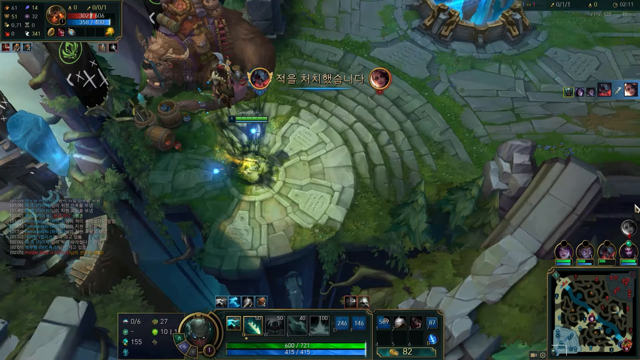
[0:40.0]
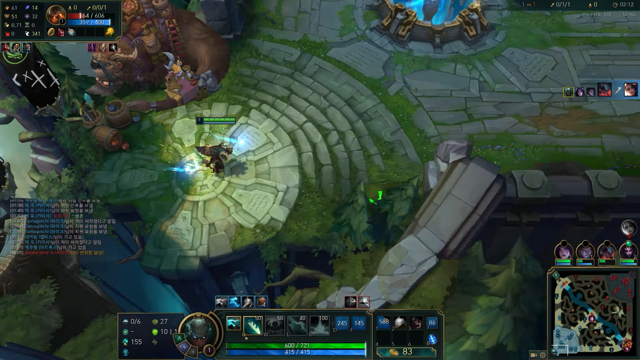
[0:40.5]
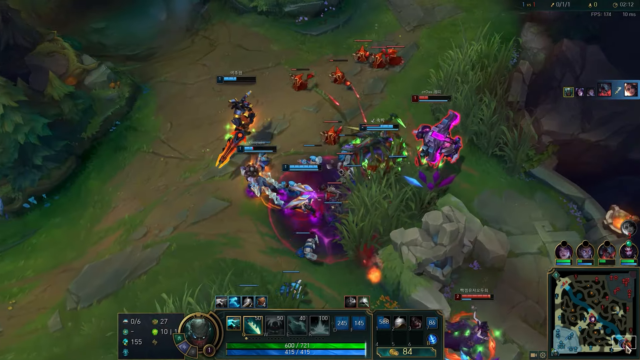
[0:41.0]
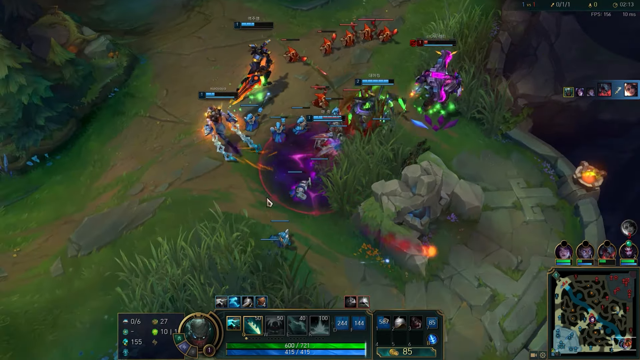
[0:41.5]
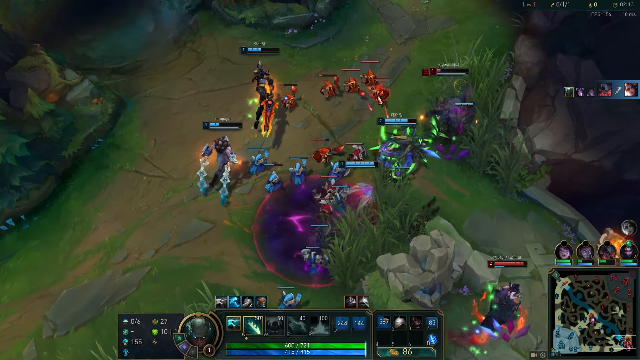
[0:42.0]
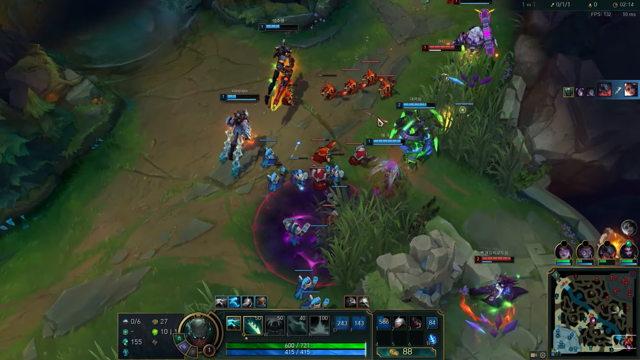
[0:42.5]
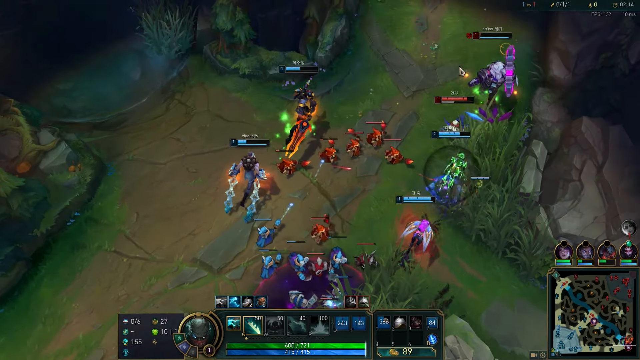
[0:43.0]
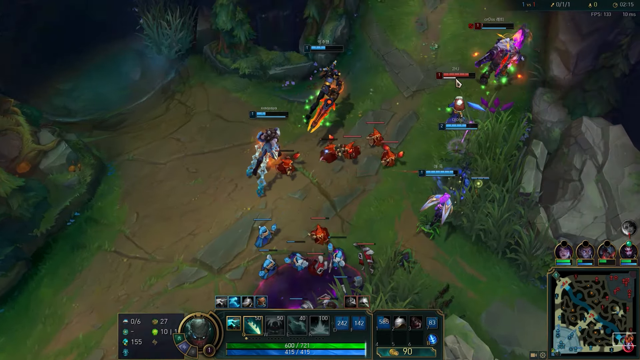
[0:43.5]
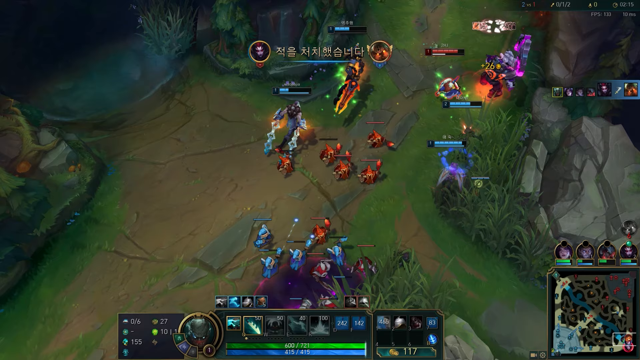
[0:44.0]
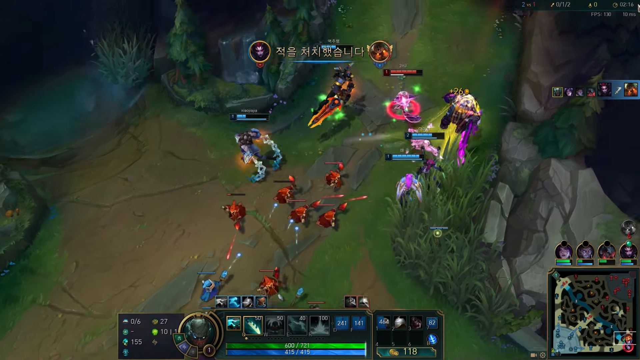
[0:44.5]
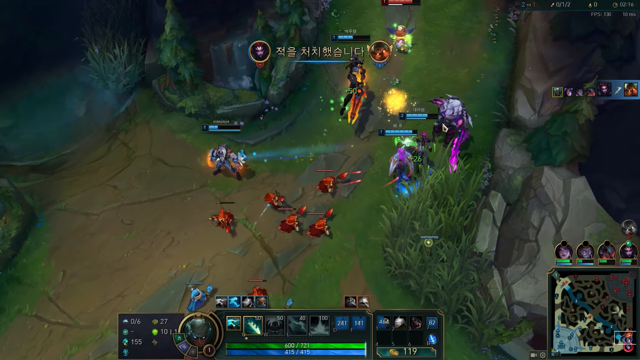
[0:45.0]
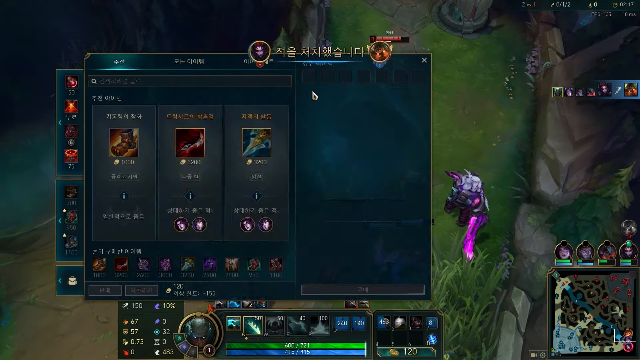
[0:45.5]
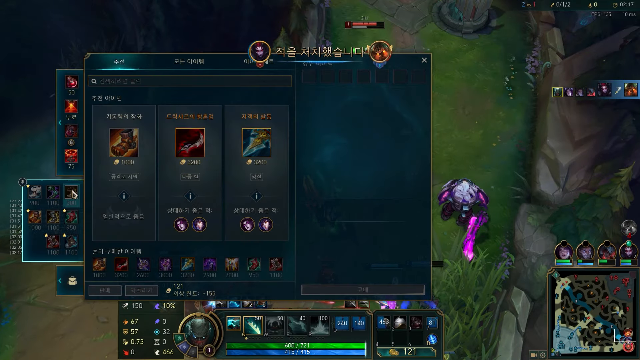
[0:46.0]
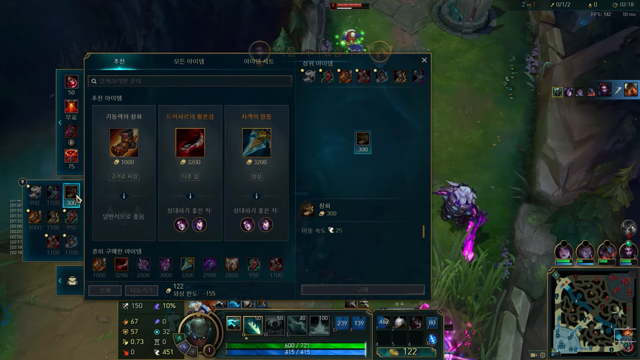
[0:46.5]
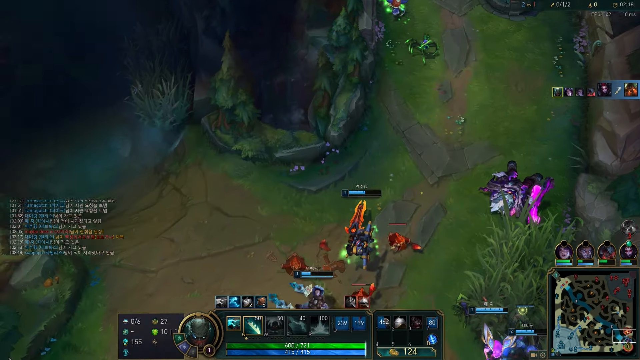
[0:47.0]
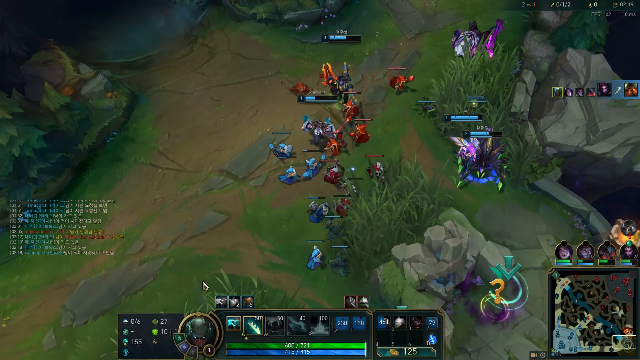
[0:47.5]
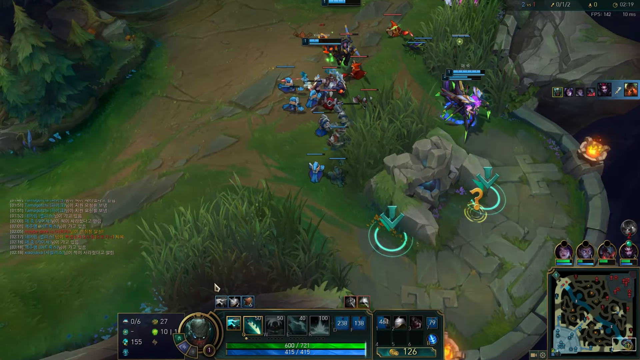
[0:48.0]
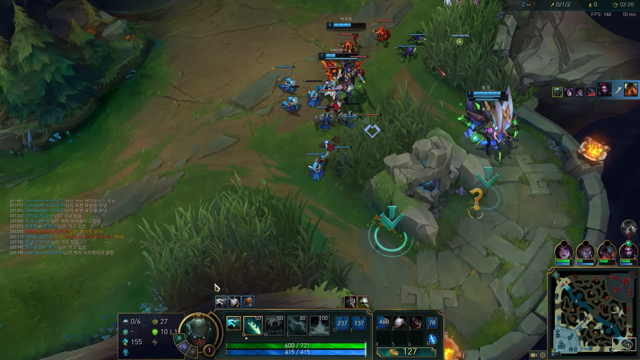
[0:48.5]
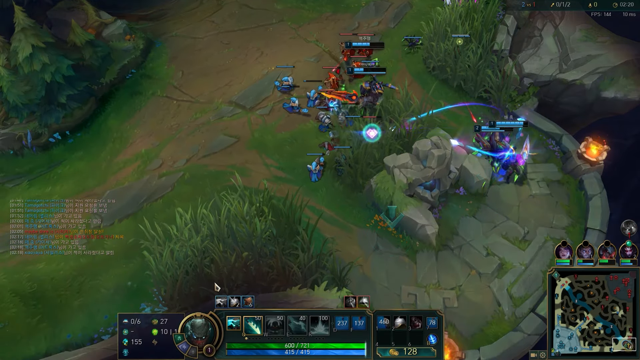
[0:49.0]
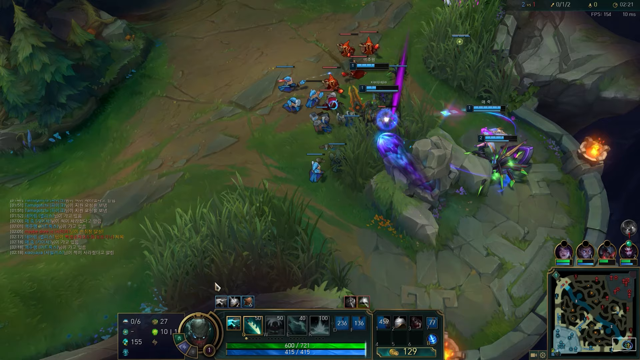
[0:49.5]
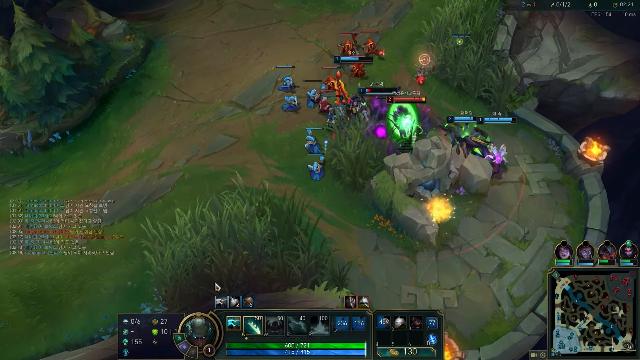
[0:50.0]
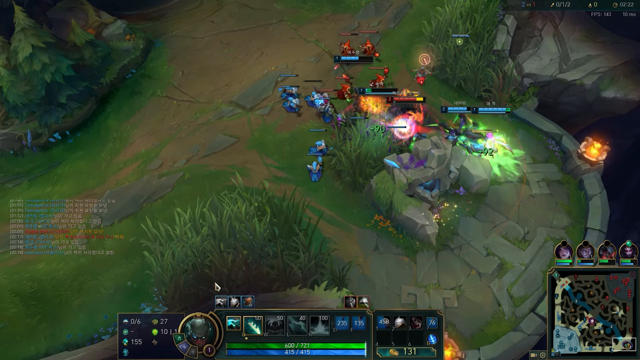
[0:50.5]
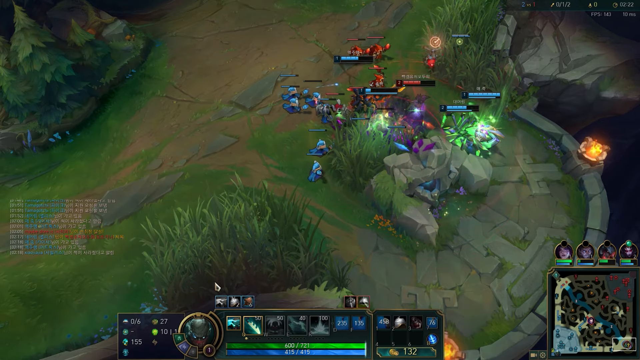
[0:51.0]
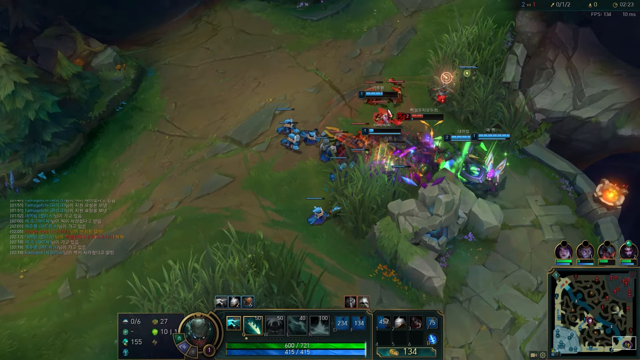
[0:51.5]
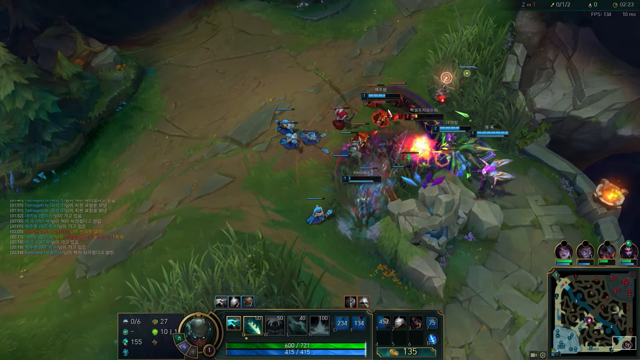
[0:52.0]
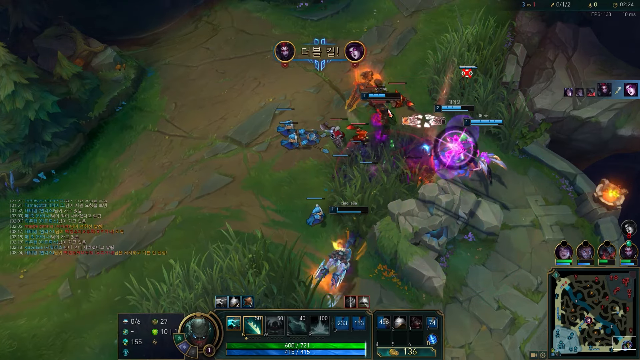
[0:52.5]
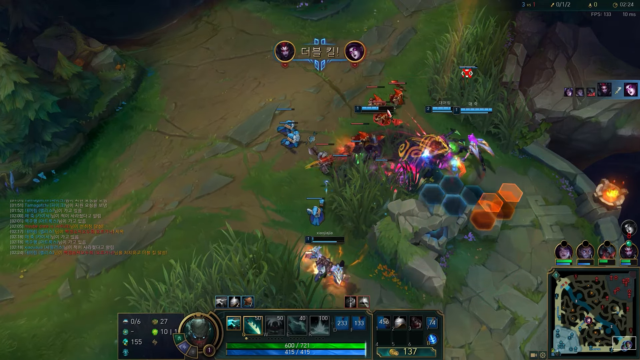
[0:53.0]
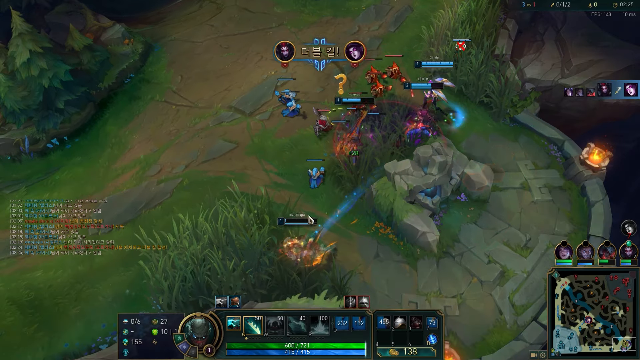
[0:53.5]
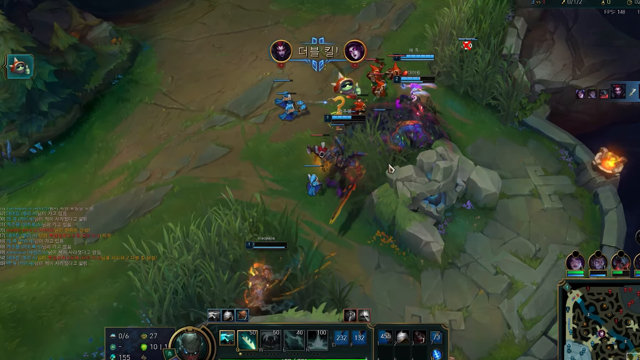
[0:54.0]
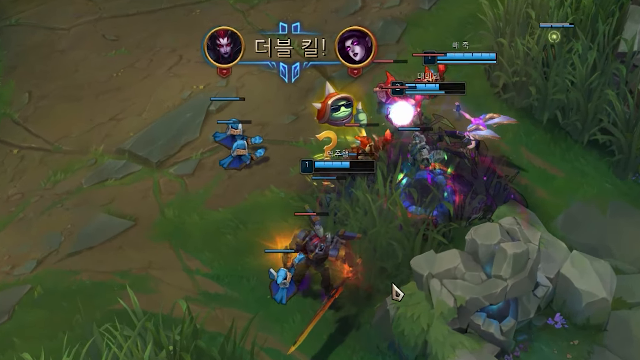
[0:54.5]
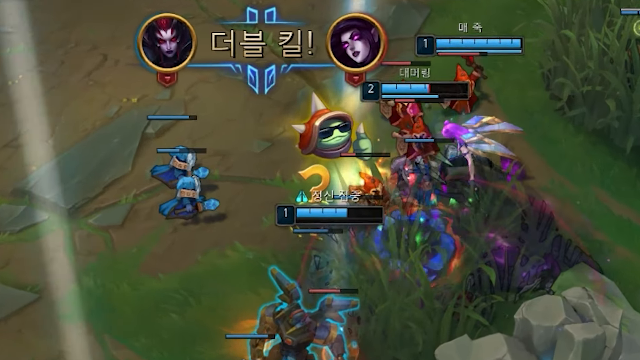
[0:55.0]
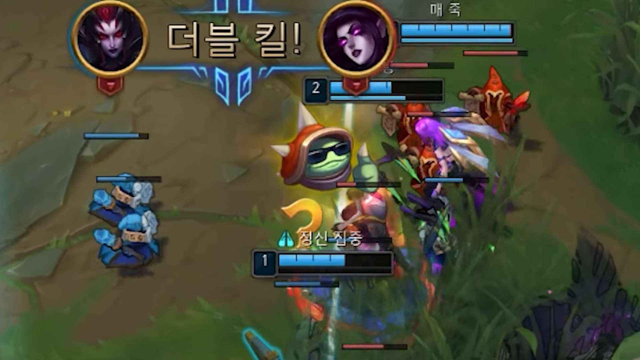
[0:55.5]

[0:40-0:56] The battle continues, with a ton of different players shooting each other and fighting. Something comes up on the screen where someone is apparently trying to switch over to something they have in store to help them win the battle, possibly better weapons or better armor. The setting is still outdoors: there is lots of stone on the ground, some grass including some very tall grass, some rocks, and some mountains. There is also a very large circular thing that kind of looks like an altar, made of white stone, with several steps coming down off of it.